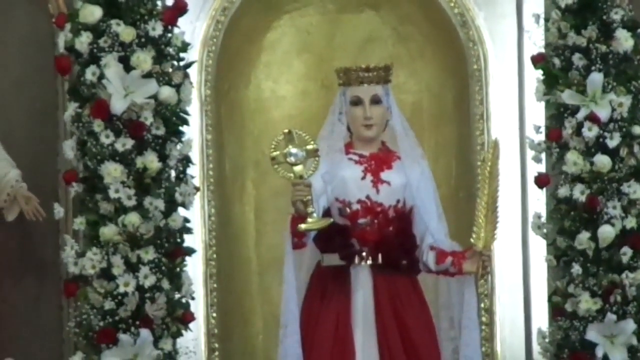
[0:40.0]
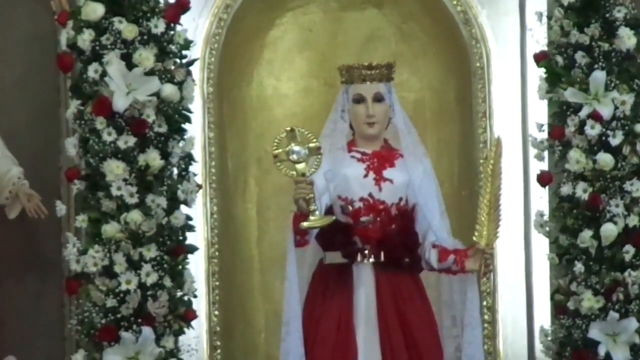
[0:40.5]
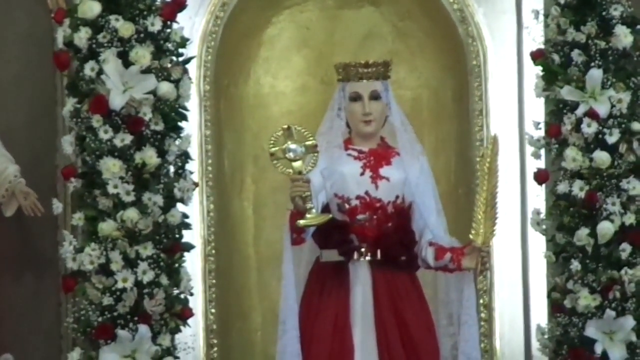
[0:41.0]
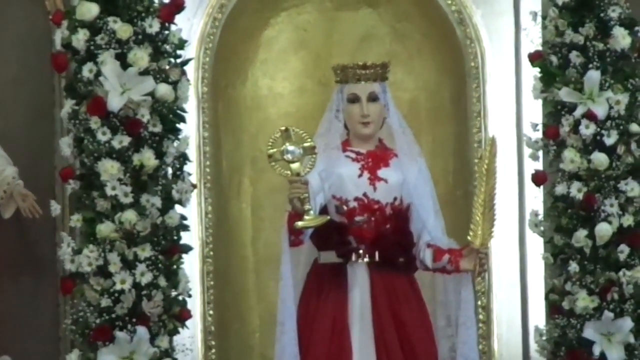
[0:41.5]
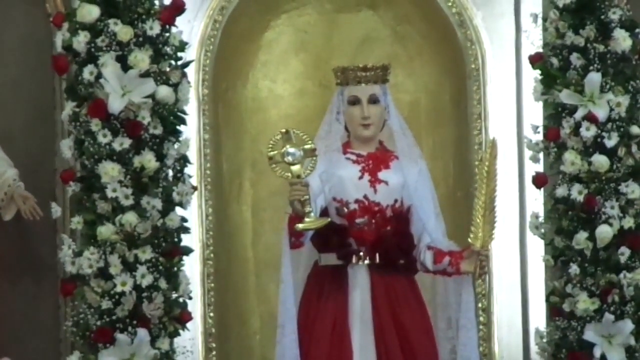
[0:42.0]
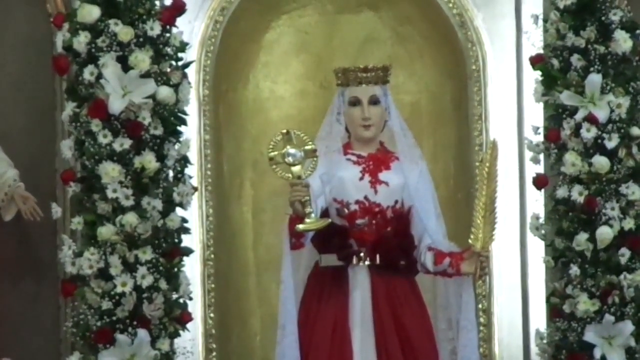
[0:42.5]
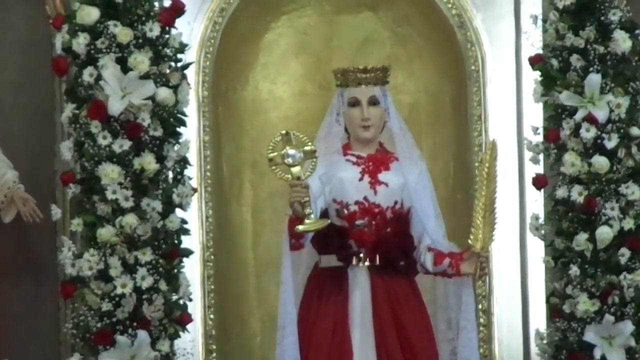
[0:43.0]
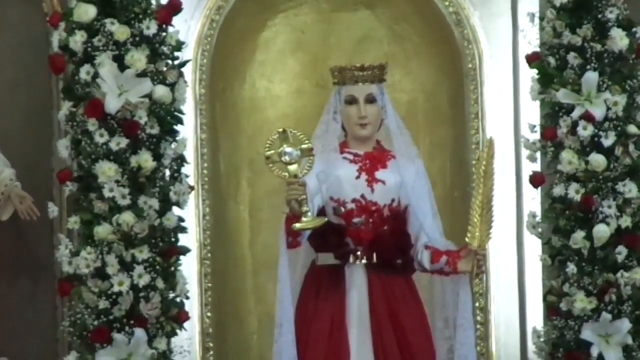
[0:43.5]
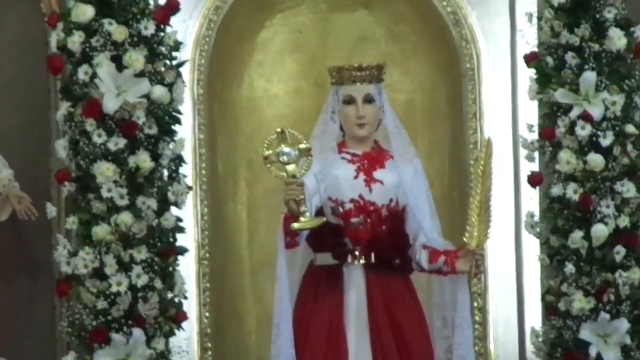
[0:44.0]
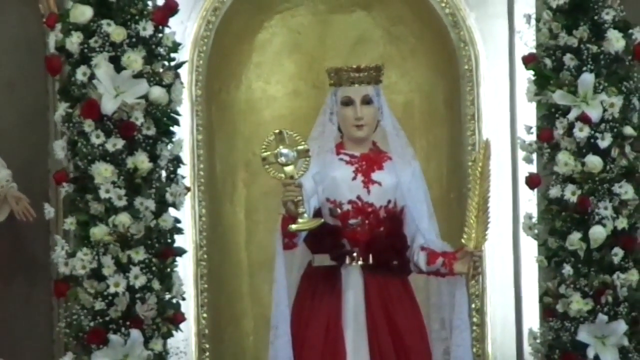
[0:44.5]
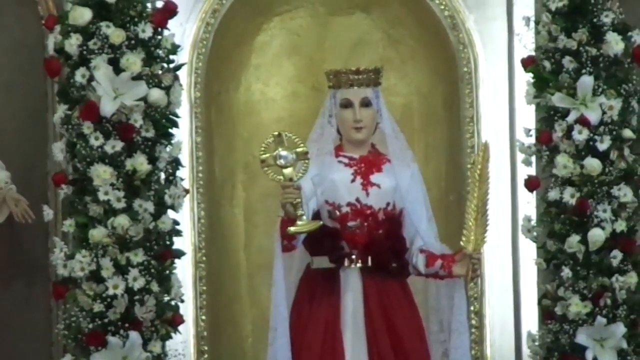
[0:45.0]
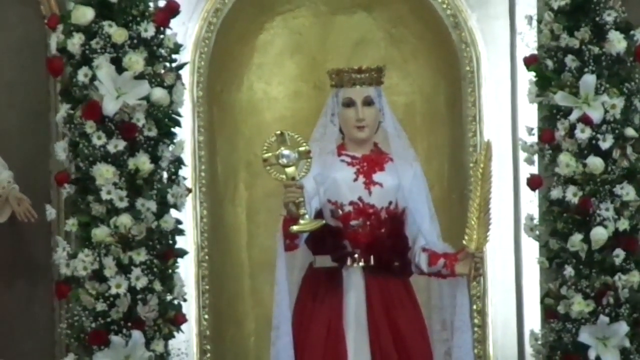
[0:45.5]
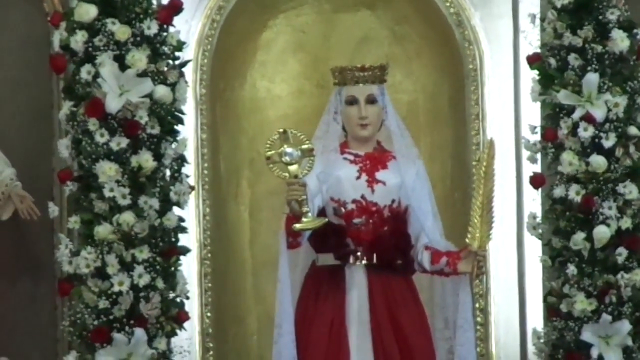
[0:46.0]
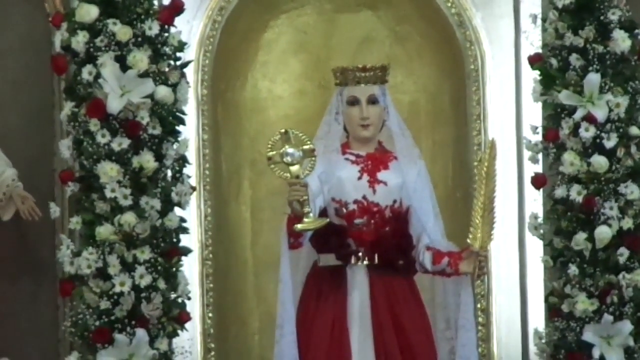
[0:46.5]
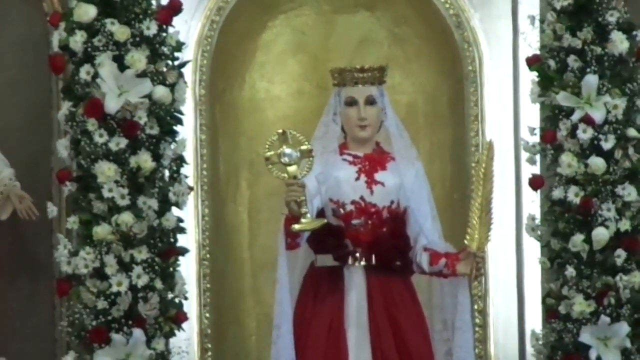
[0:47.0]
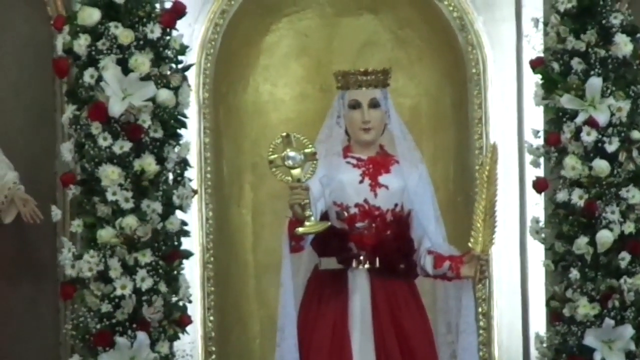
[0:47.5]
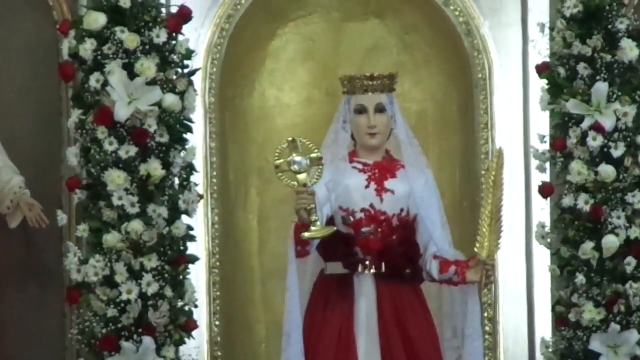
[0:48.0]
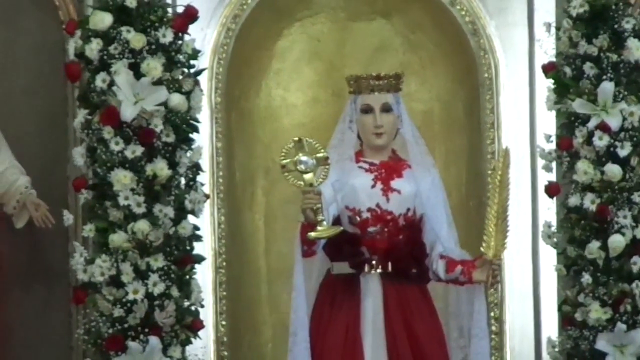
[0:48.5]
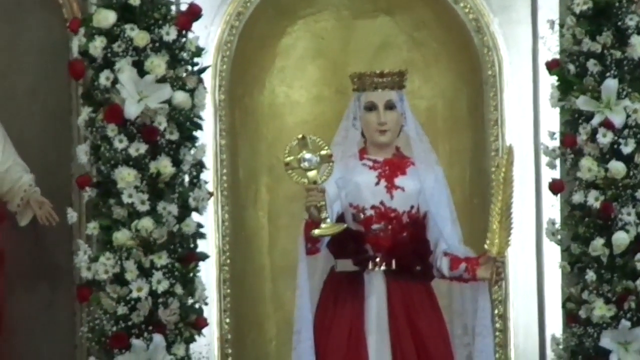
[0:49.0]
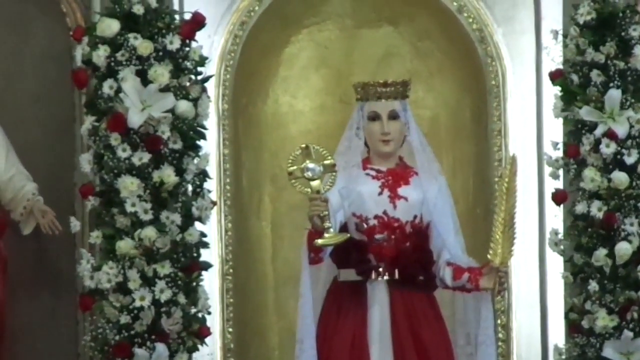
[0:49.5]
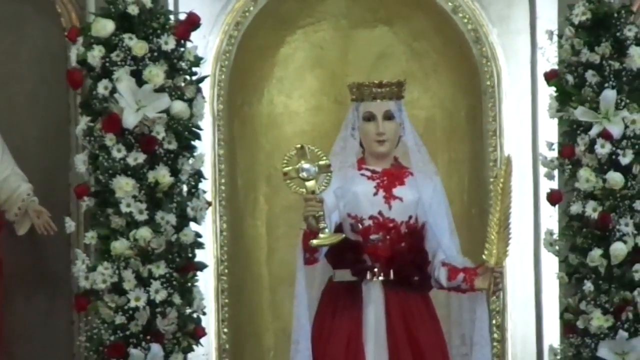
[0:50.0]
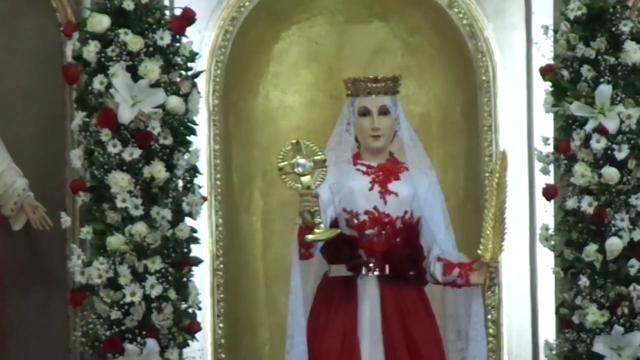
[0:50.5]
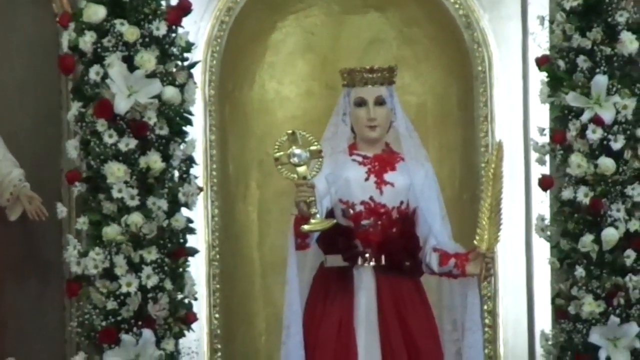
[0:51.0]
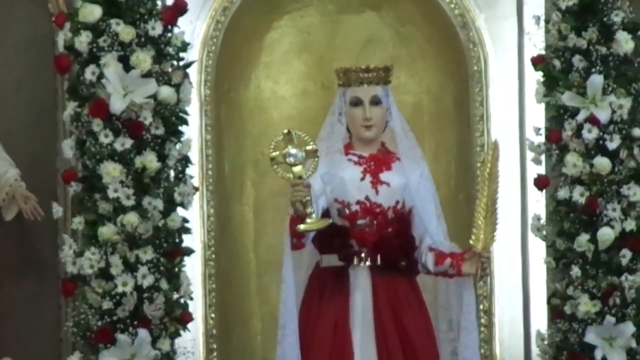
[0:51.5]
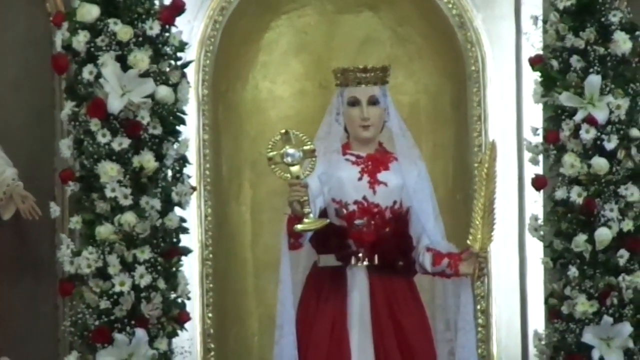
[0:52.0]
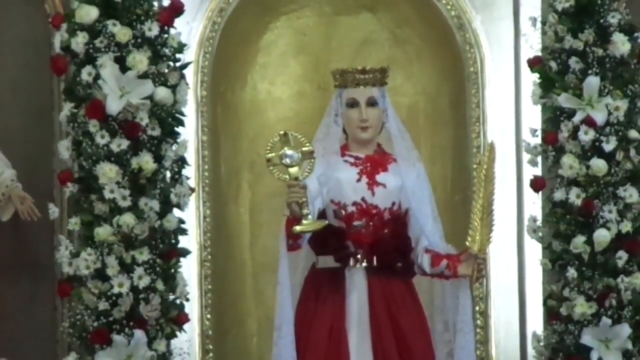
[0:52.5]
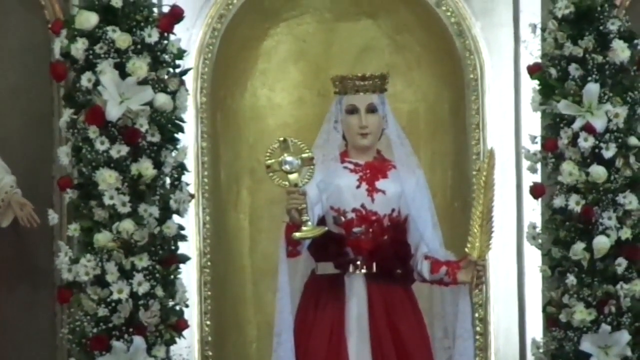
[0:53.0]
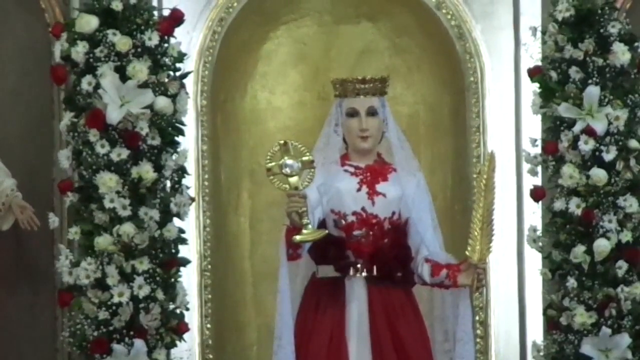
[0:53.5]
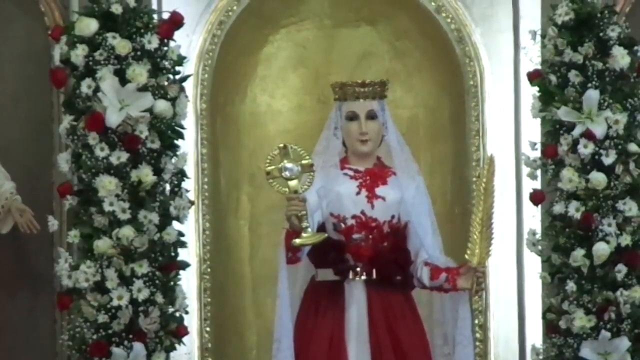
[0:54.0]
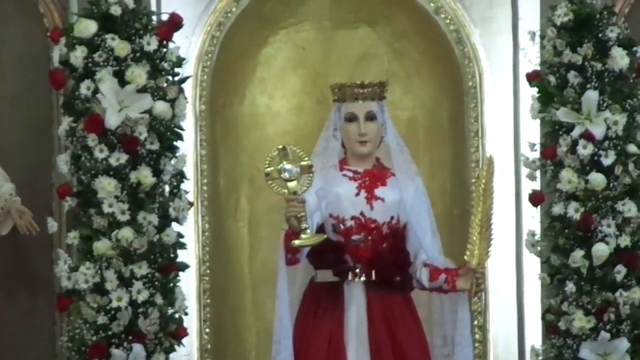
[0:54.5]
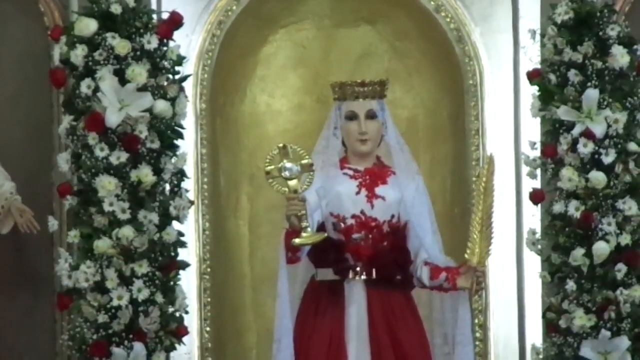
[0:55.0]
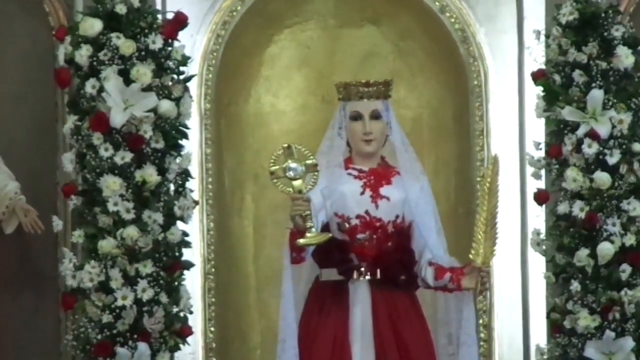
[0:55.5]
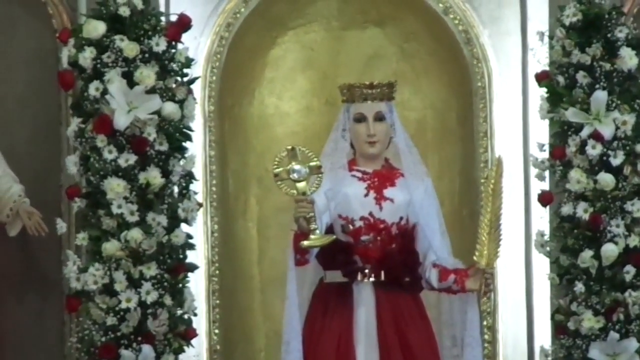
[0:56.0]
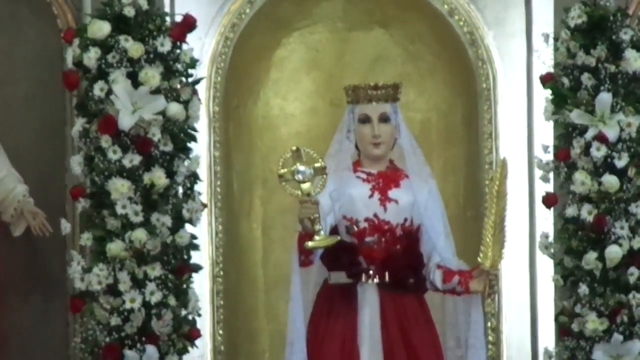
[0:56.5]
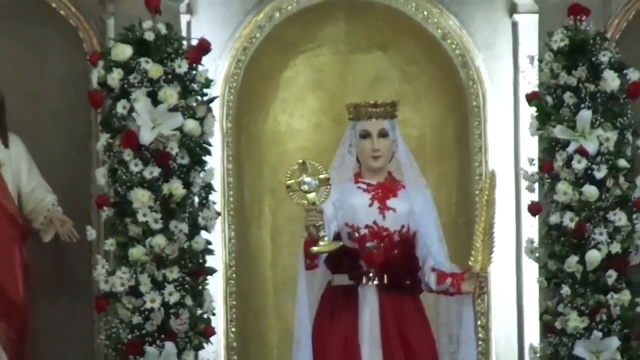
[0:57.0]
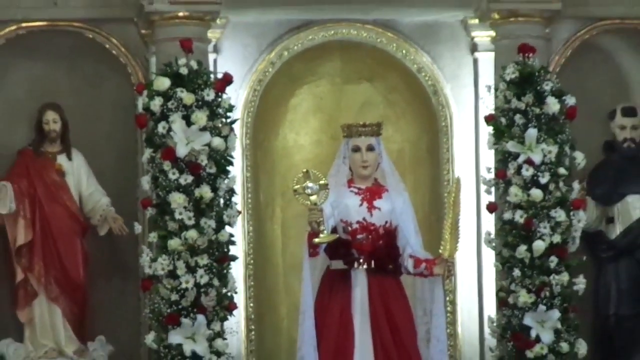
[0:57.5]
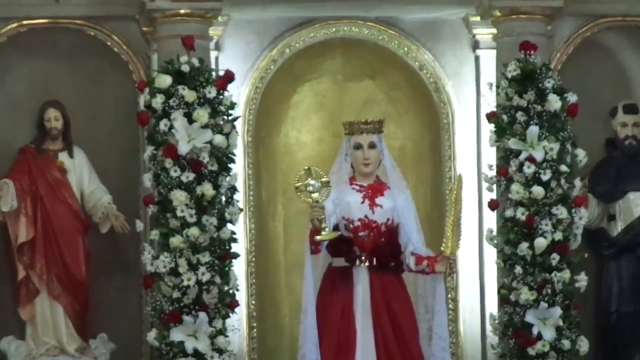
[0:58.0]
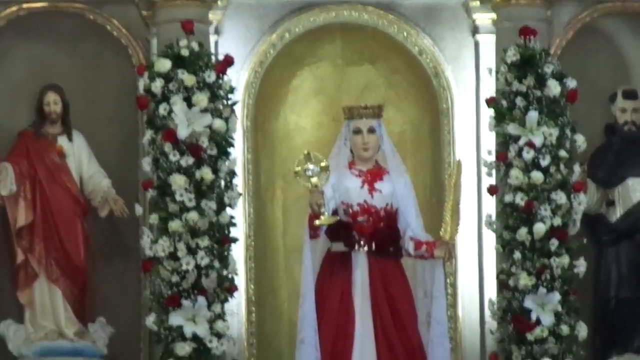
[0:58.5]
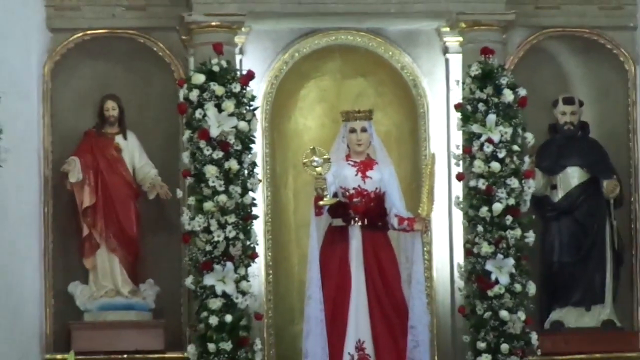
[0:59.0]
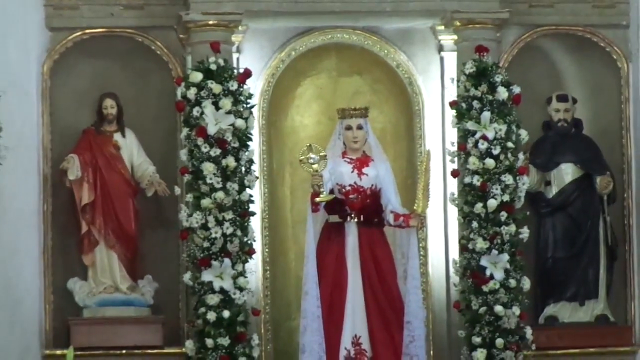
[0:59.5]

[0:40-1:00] Inside a small church, the camera is zoomed in on the back wall where the altar is. Three kind of statue characters are on the back wall, and the shot focuses on the middle one, a woman who looks like a princess wearing a crown. She wears a white headdress and a white and red dress, holding a golden hand fan in her right hand and a golden feather in her left. She is stood in front of a kind of golden archway, and on either side of her are pillars of flowers made up of white daisies, red carnations and white lilies. The camera zooms out to show more of the back wall and the other two characters: Jesus on the left, wearing a kind of white tunic, and a man in a black robe on the right.